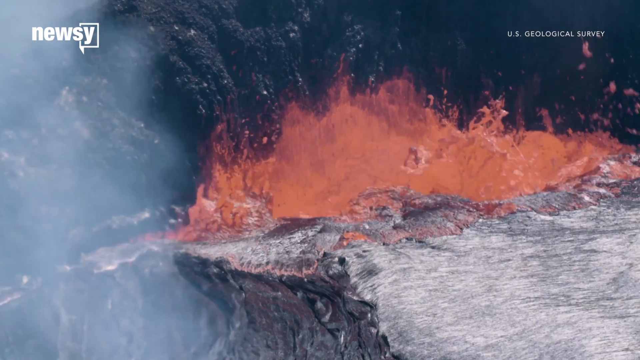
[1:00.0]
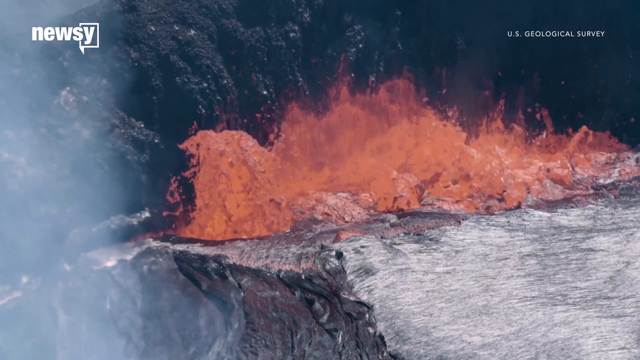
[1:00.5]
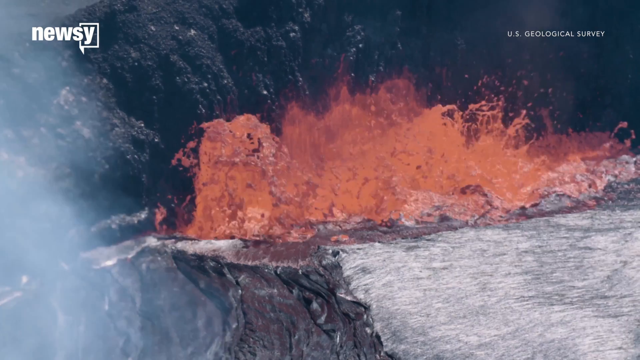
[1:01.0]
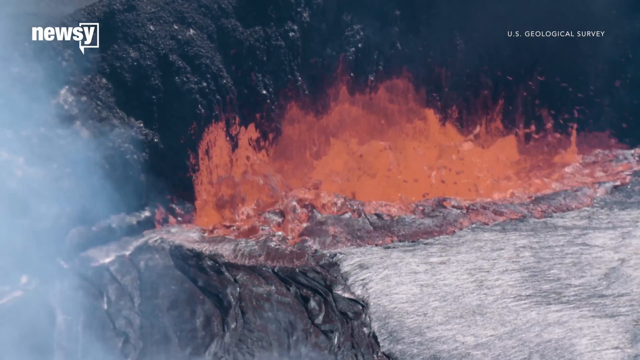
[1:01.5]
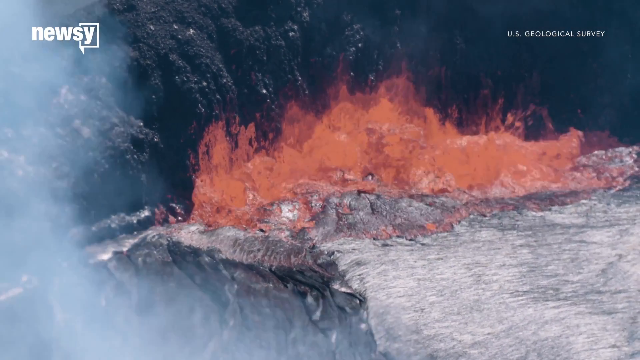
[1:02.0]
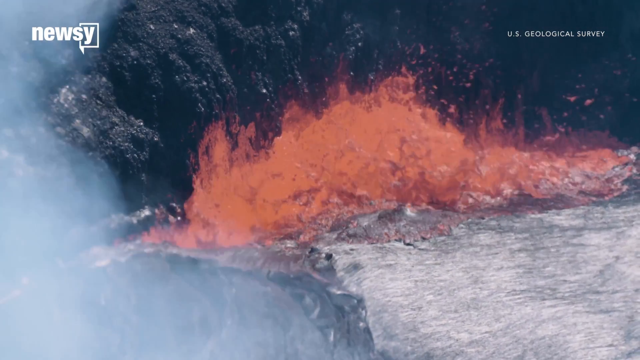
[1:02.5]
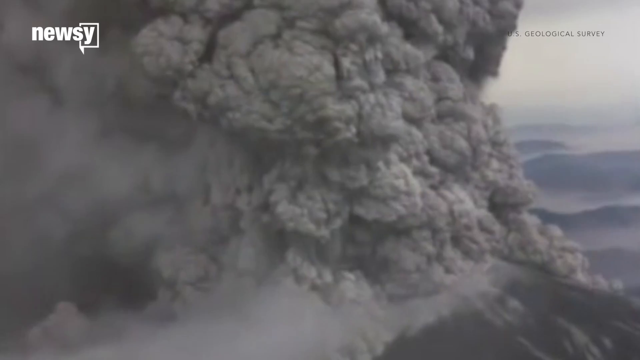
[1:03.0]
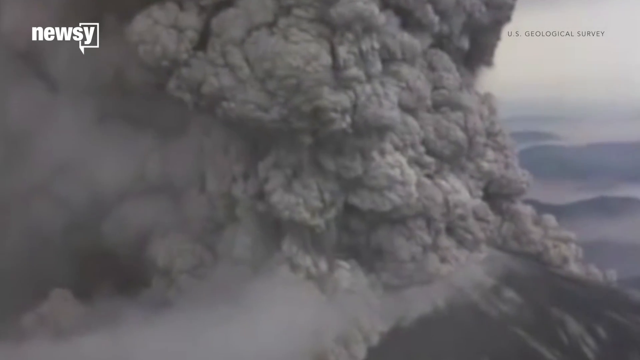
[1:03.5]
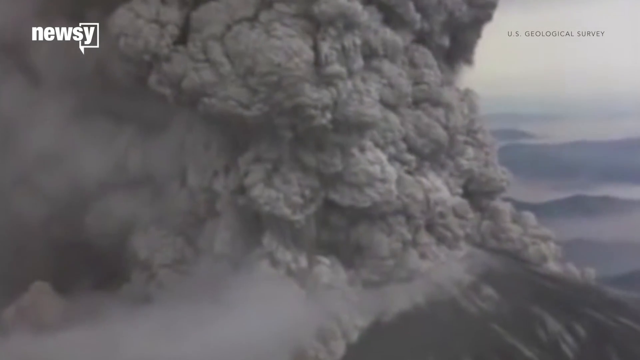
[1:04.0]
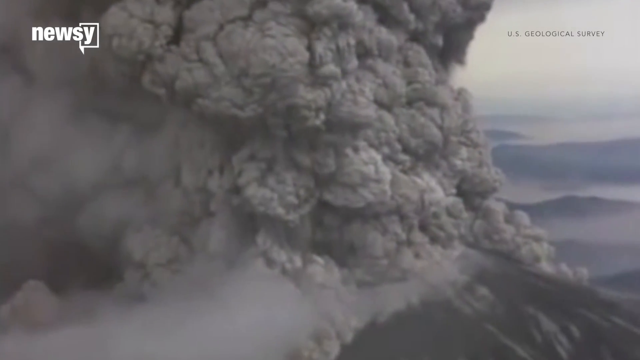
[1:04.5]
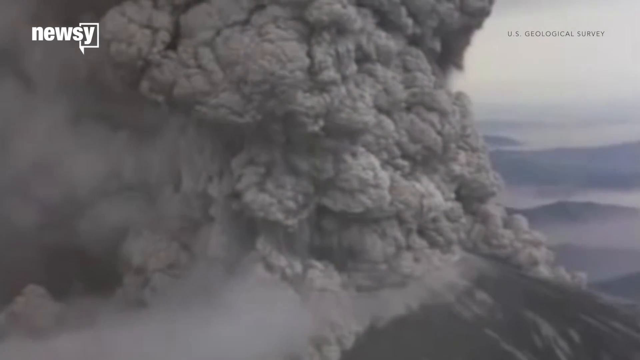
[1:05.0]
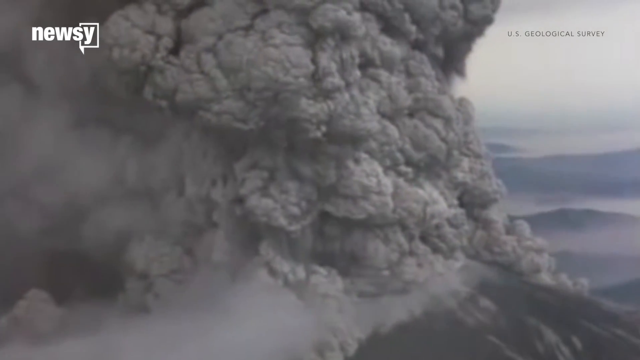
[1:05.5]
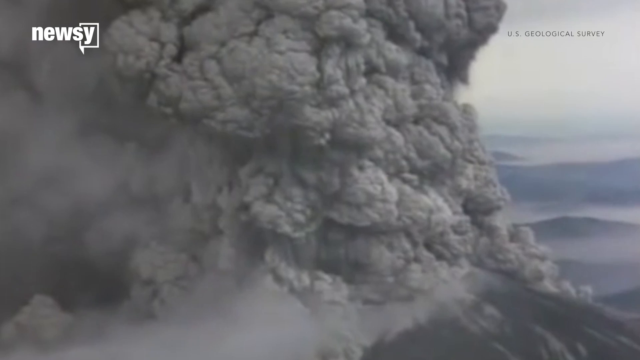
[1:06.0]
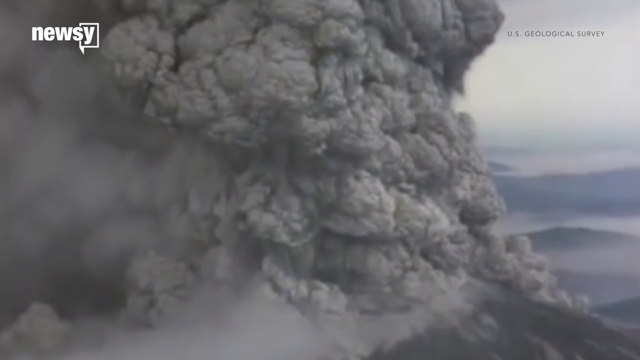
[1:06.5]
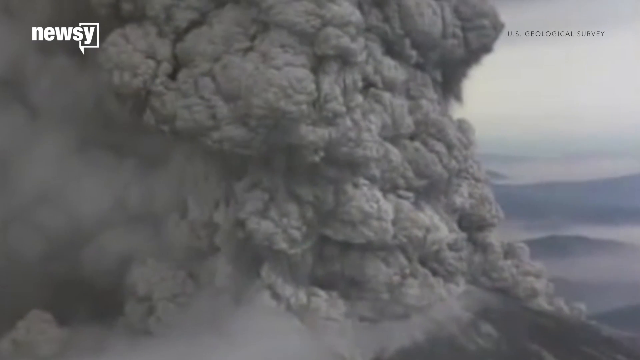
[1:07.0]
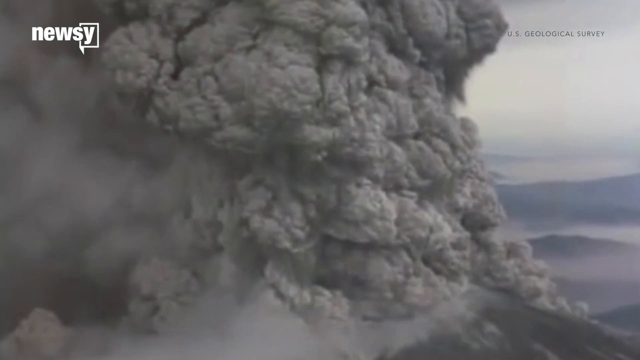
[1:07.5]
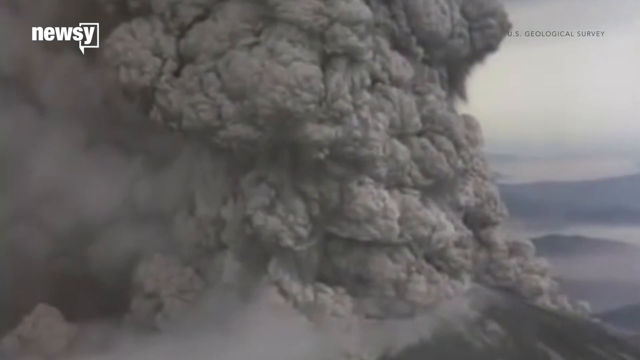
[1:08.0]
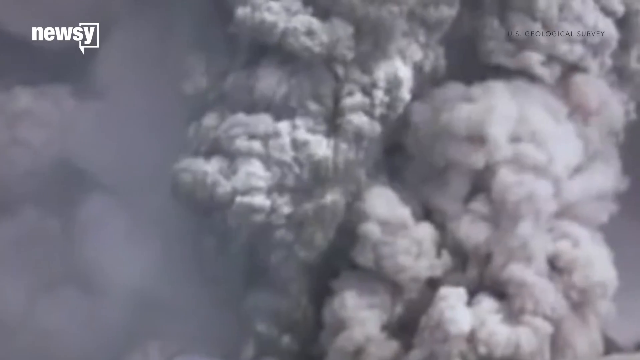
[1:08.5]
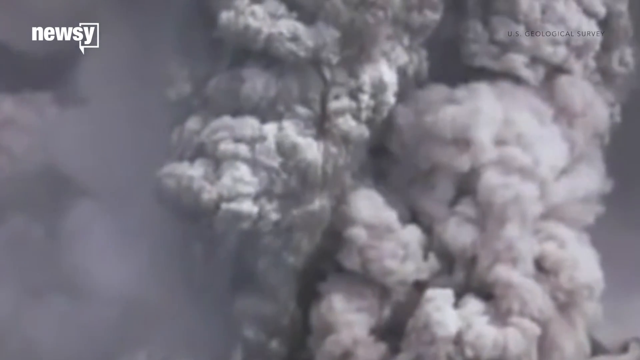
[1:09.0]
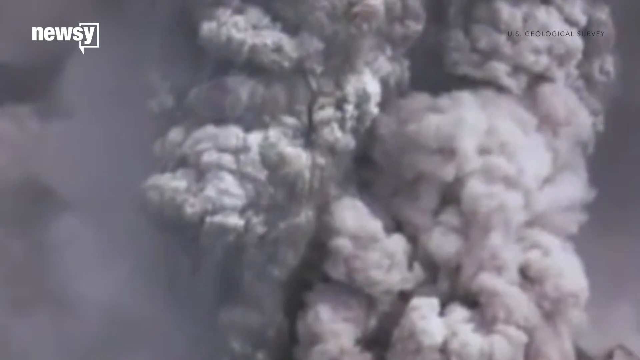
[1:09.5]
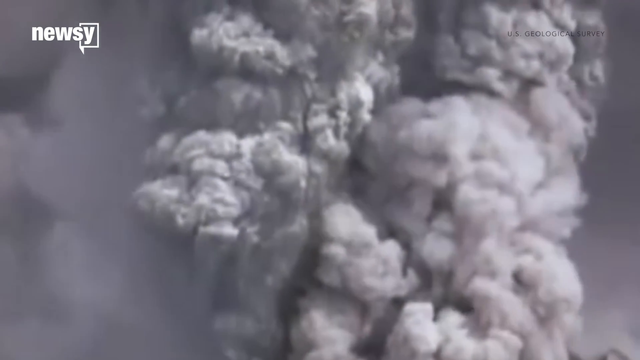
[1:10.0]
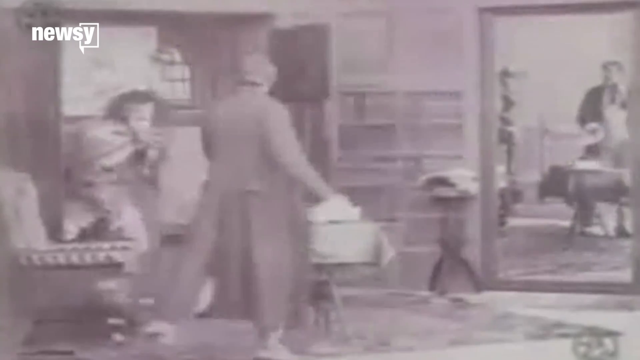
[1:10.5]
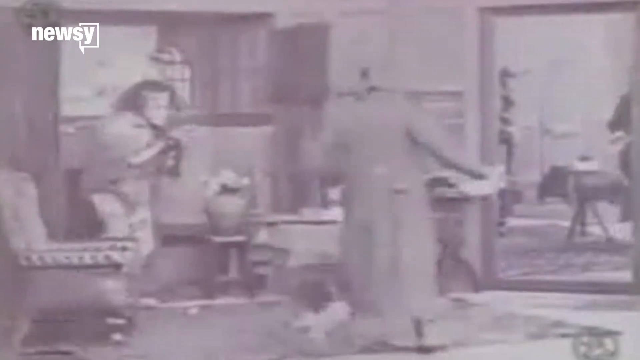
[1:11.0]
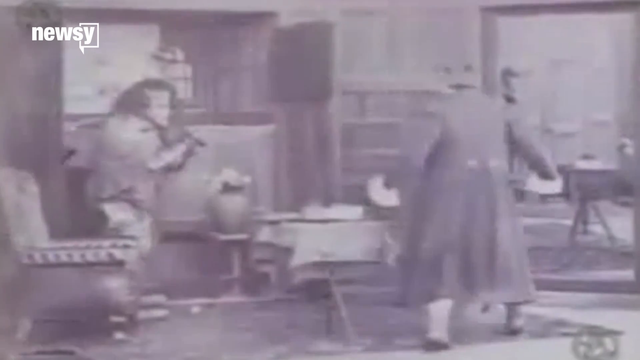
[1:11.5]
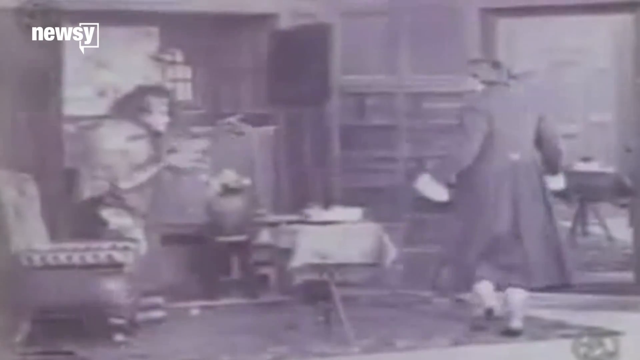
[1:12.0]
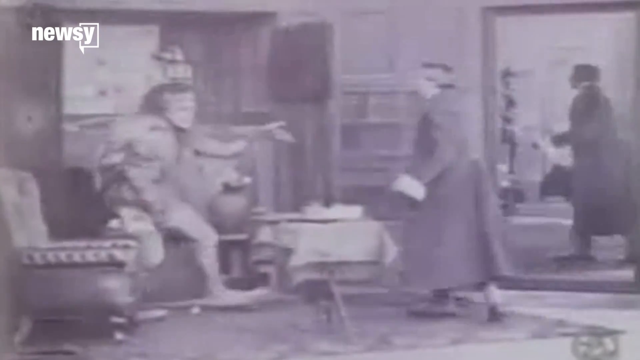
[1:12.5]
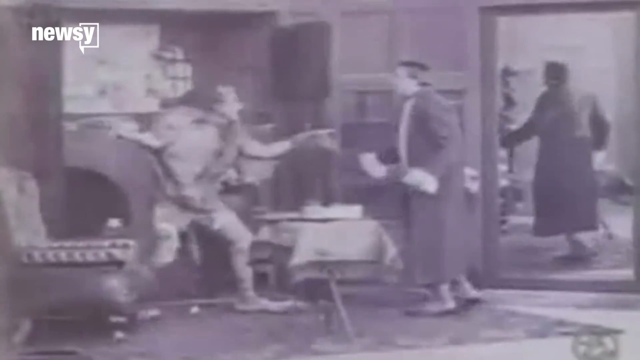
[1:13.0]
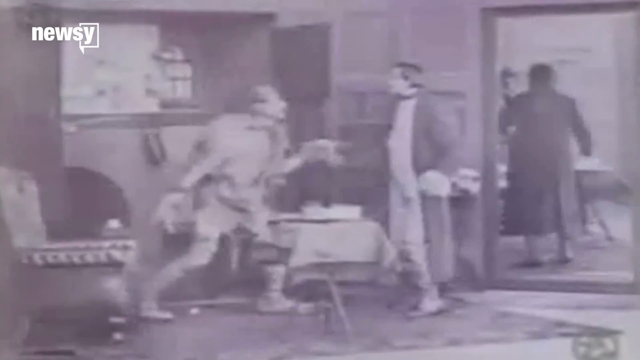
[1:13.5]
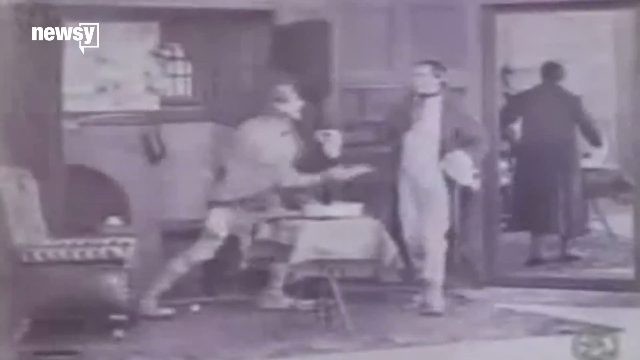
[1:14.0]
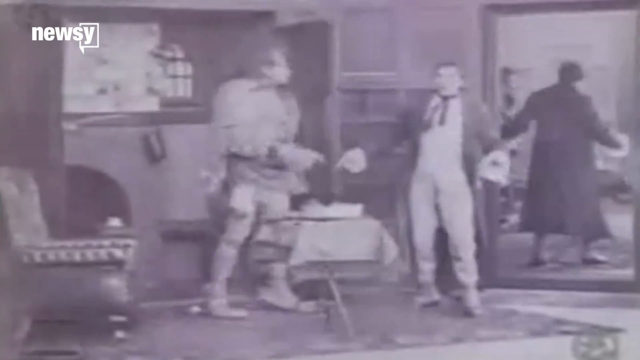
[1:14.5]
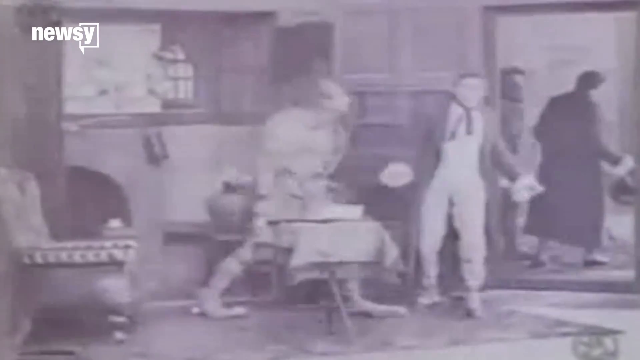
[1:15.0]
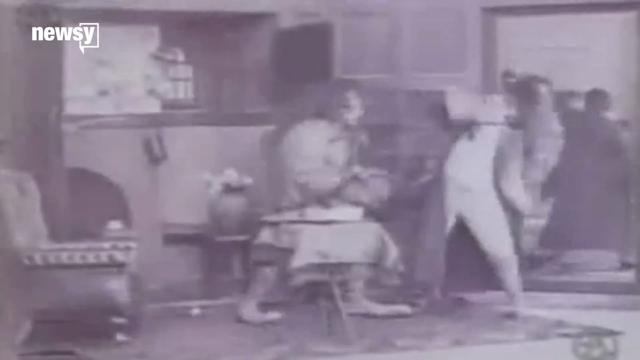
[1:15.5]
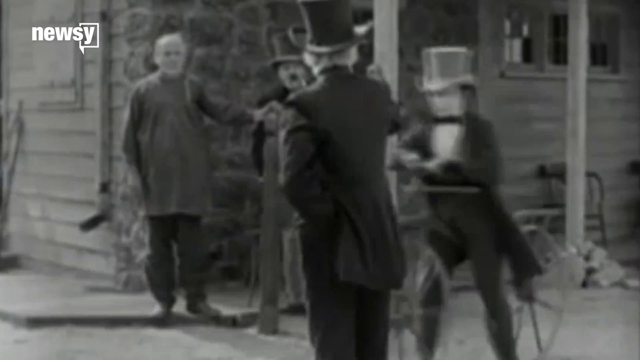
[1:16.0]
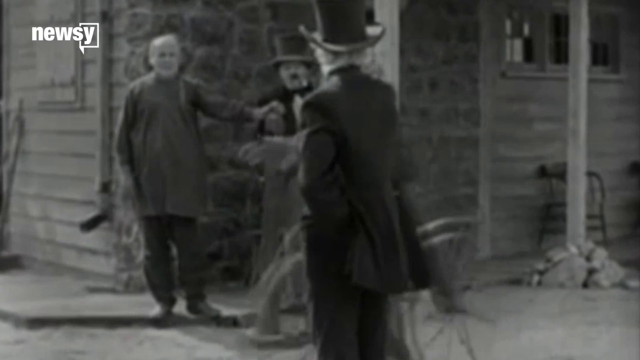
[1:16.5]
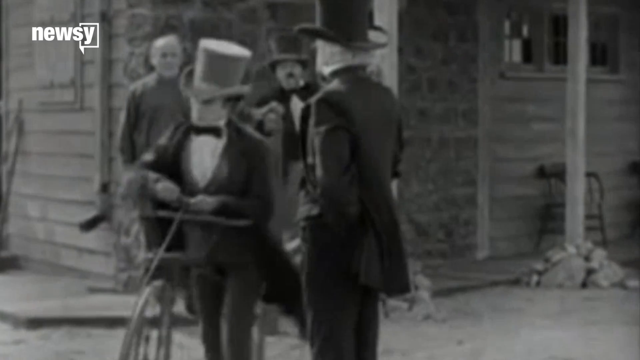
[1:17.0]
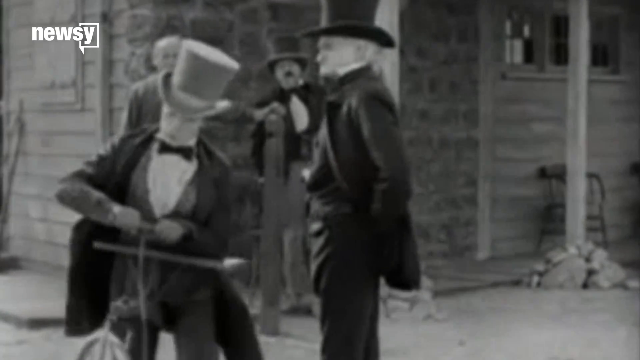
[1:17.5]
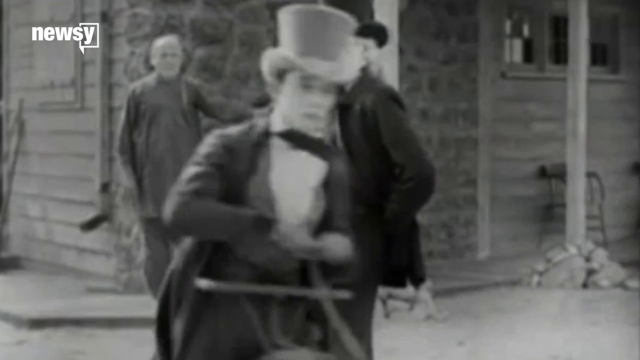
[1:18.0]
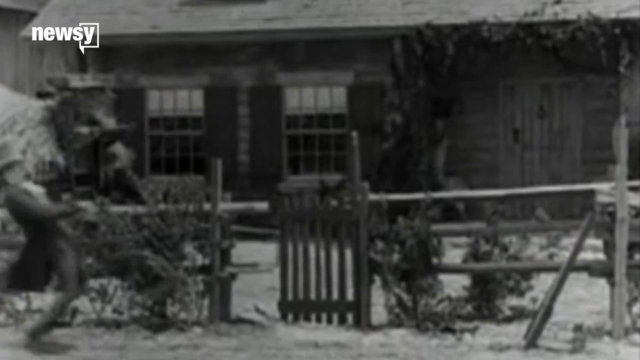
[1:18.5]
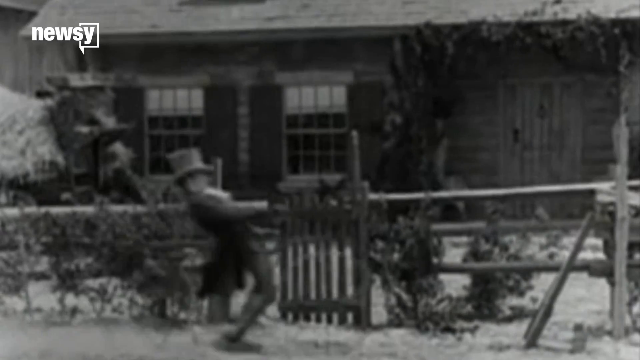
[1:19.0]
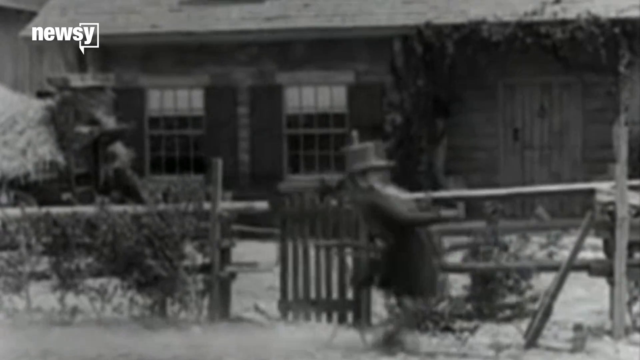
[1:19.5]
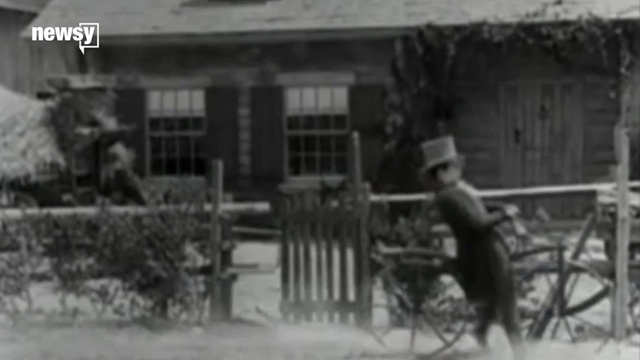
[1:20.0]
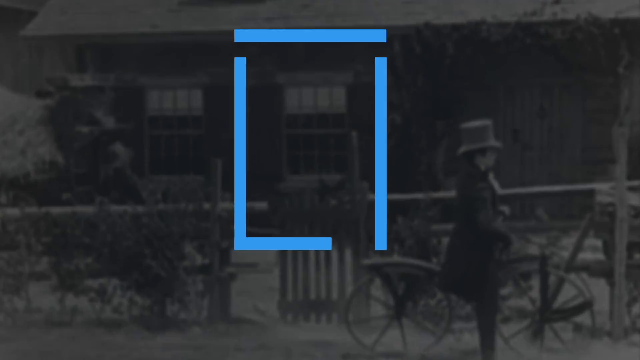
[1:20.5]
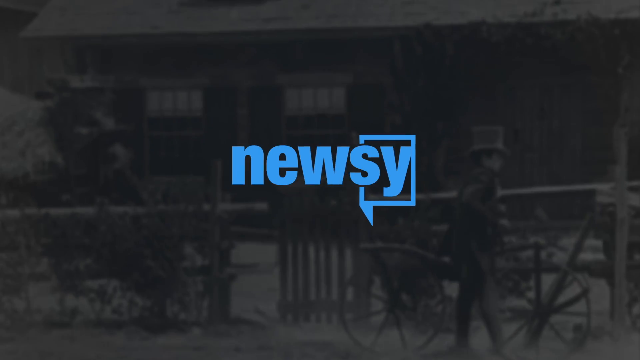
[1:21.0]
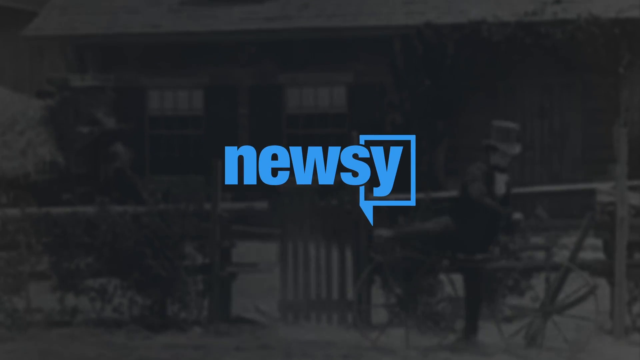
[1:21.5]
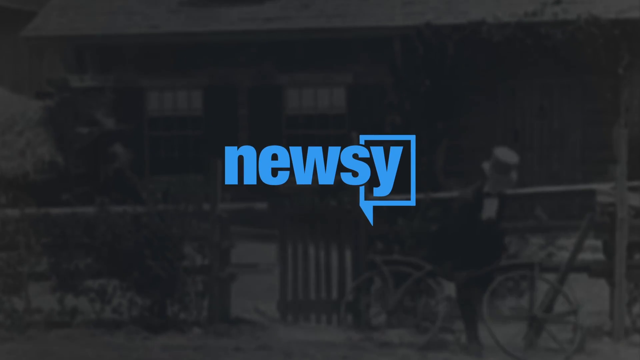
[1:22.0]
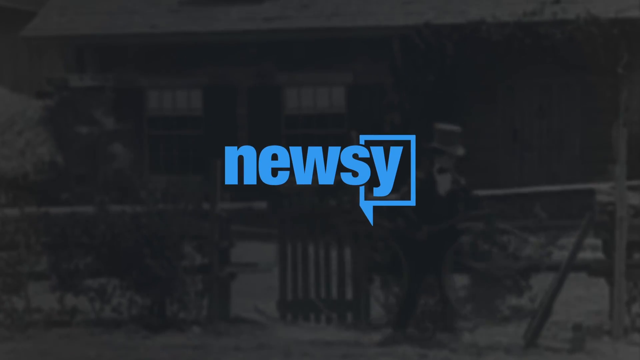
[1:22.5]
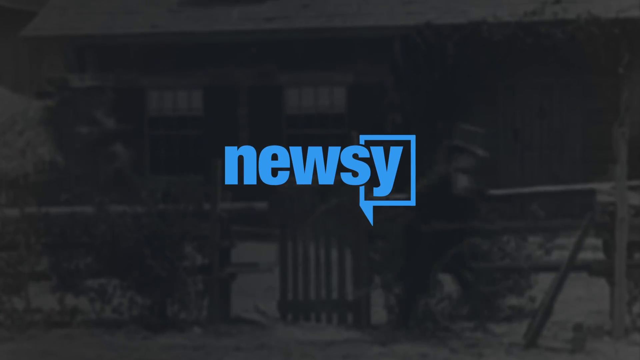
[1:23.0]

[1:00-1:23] Orange lava and ash spew upwards from the ground, with smoke around and frothing grey foam nearby. A lot of ash and smoke fills the sky from a volcano that has erupted in the top right, with a credit to the US Geological Survey. Little can be seen through the grey smoke, and a few different angles are shown. Next comes black-and-white footage from a very old time period, filmed as though from over 100 years ago, showing two people having a disagreement, followed by a clip from a film with some men in top hats in motion. The Newsy logo then appears in blue at the end of the video, with the black-and-white old film still in the background.